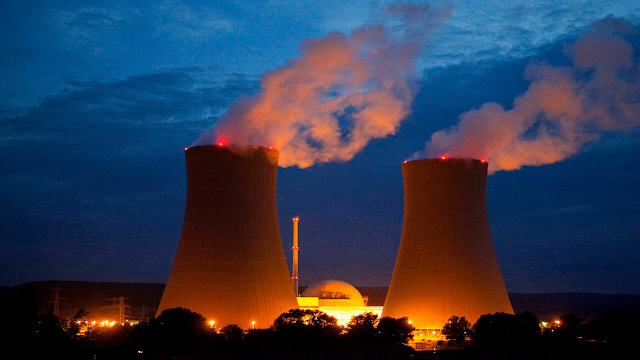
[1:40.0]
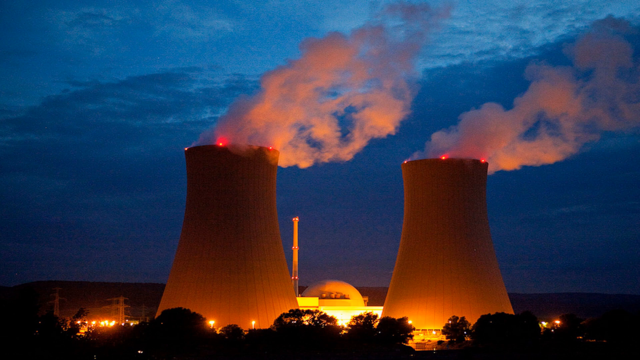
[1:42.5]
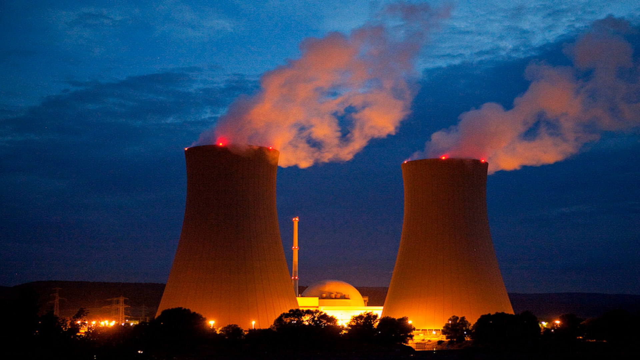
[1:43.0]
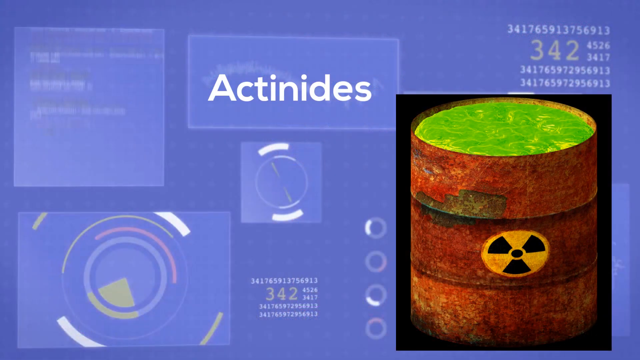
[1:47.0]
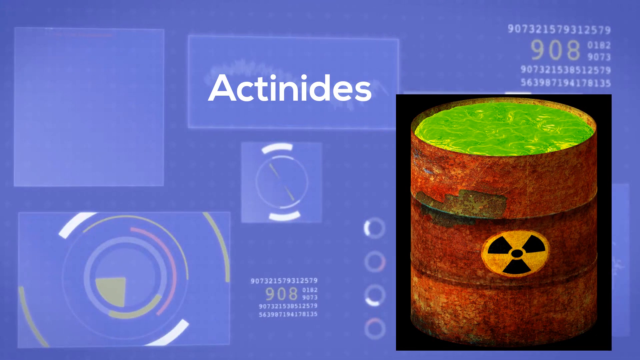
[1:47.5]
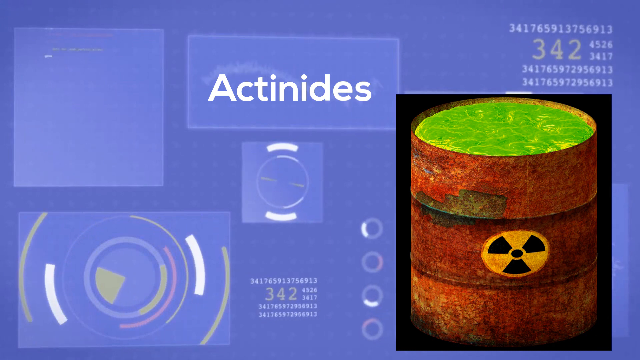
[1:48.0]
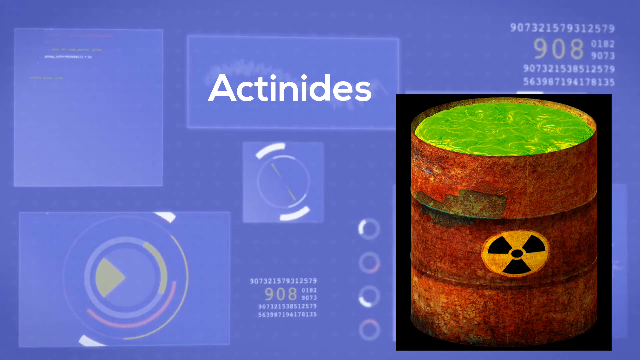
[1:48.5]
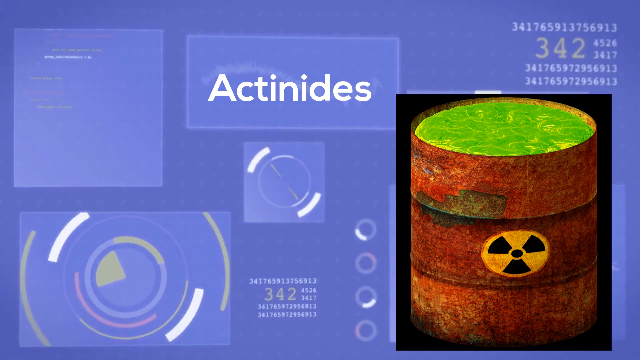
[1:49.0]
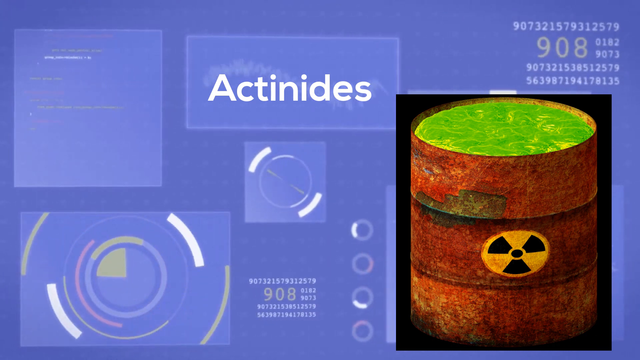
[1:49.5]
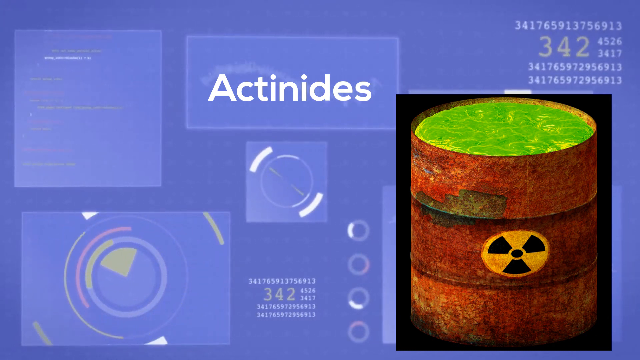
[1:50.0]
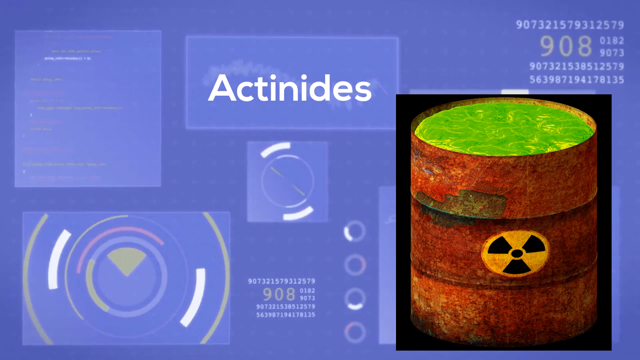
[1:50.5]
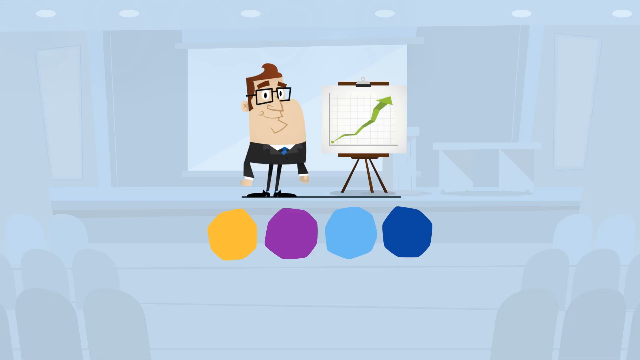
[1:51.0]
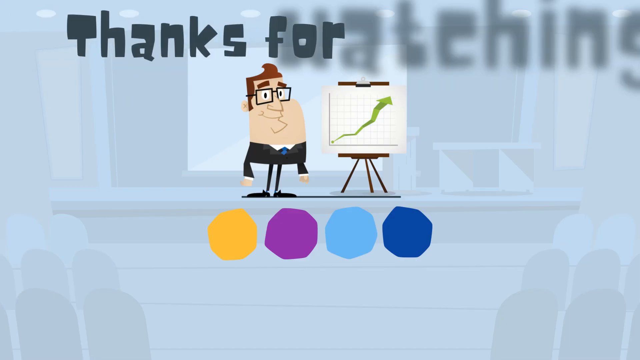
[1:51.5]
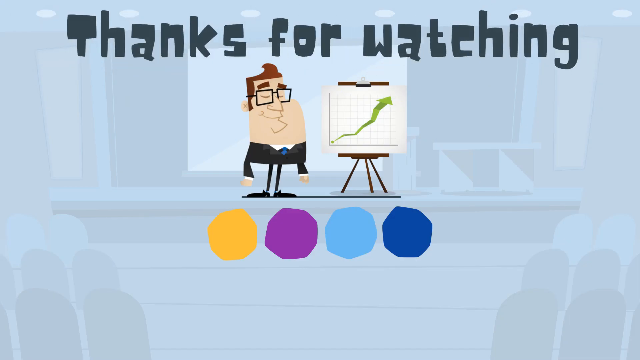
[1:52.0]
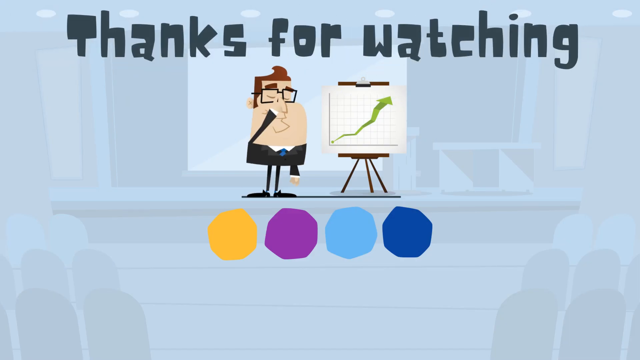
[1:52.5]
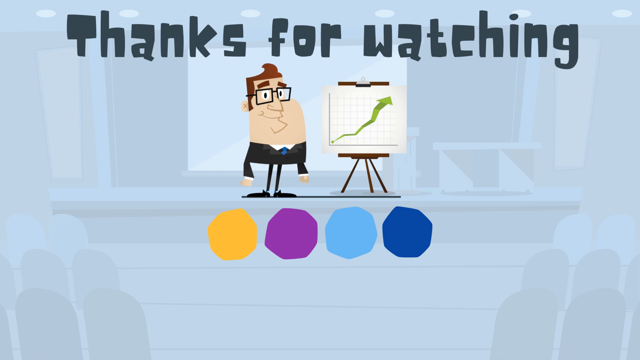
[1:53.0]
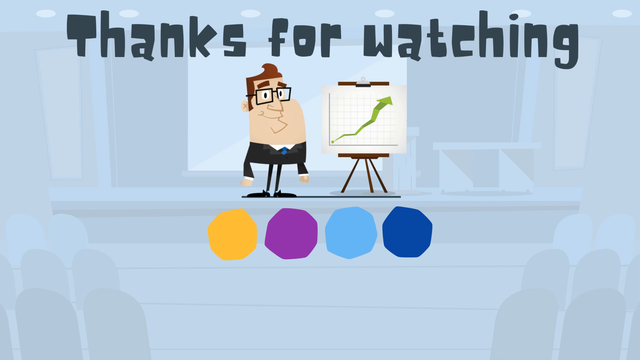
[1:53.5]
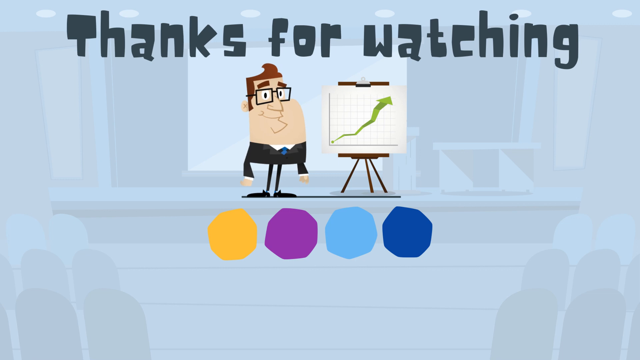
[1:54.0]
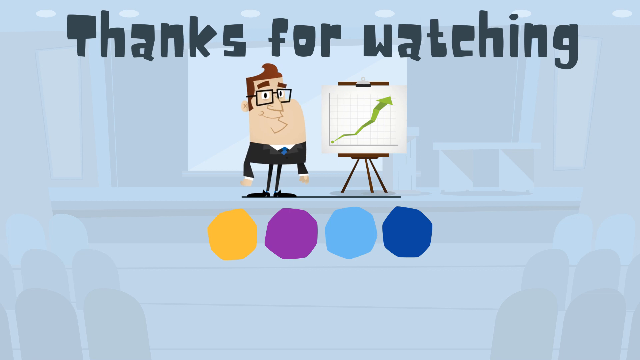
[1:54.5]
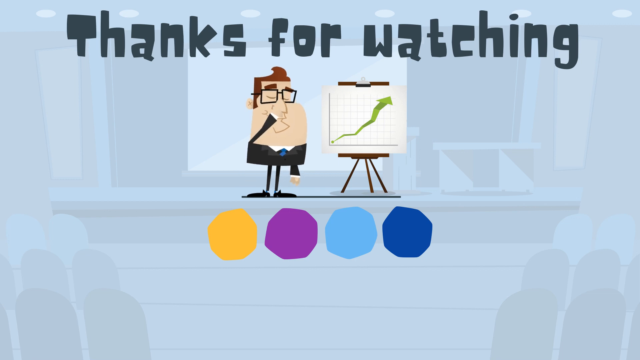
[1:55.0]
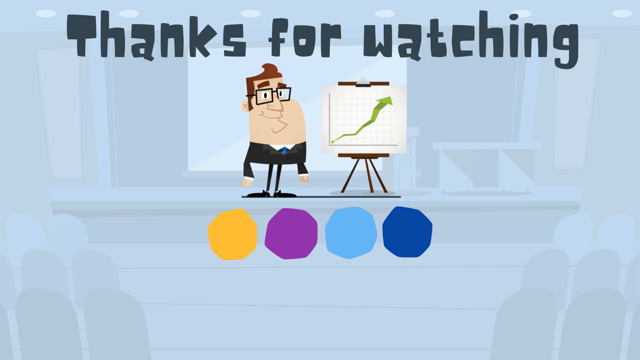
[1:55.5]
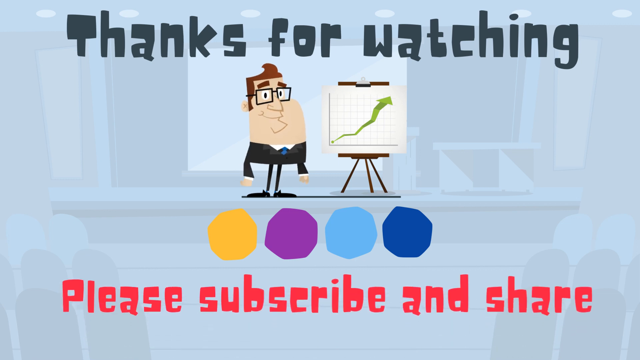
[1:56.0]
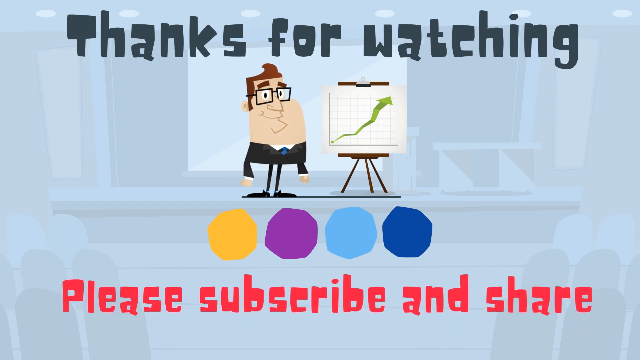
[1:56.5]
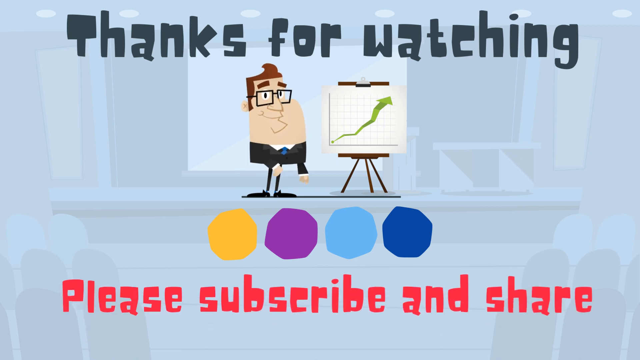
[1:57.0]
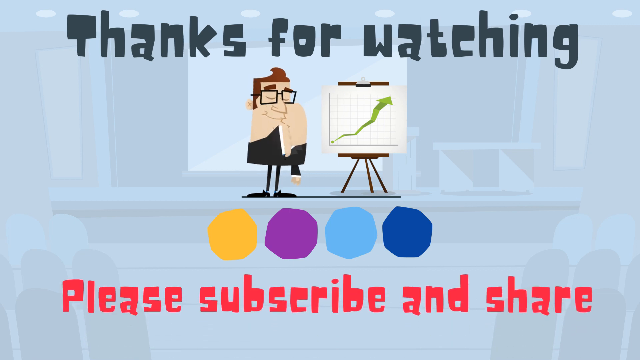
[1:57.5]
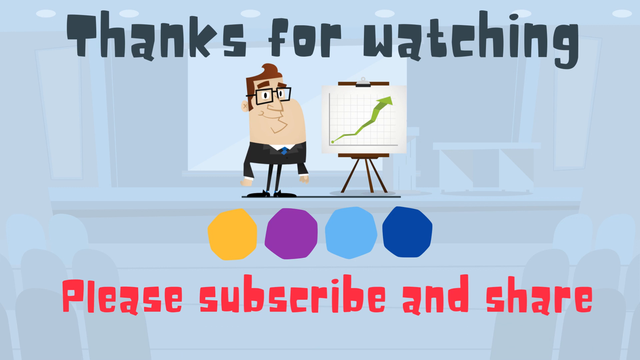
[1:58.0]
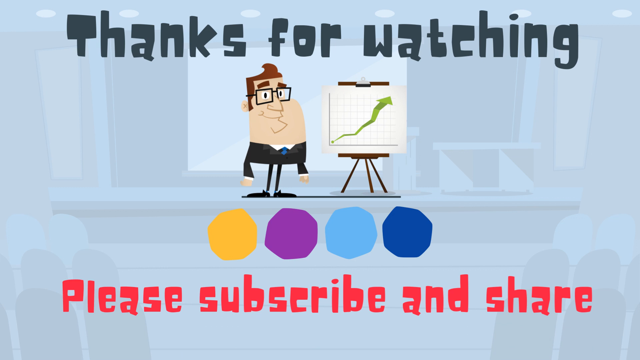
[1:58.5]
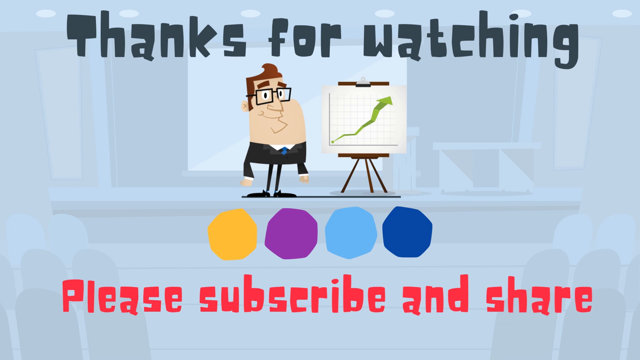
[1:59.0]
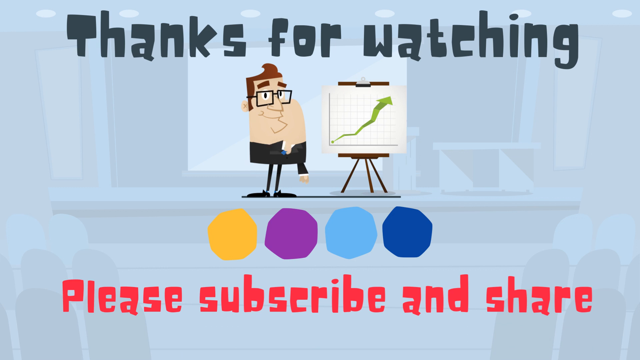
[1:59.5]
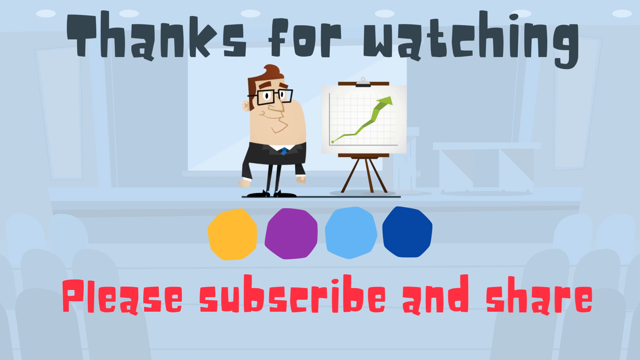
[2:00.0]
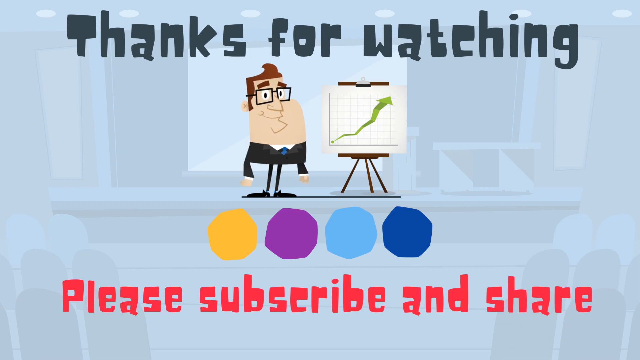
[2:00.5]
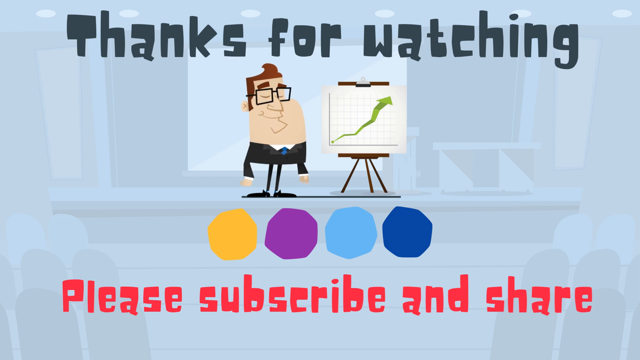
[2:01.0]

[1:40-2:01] The power plant is a static image showing two big, sort of column-shaped structures sitting right next to each other, with a lot of smoke coming out of them and flowing to the right. The smoke has a sort of orangish hue from light coming from below. The video then cuts back to the animation with the oil drum, with text at the top reading "Acindiz." An end screen follows with a sort of chibi-looking animated man with a big head and small body, constantly adjusting his glasses. At the top it says "thanks for watching," and at the bottom, in red text, "please subscribe and share." Right below the man are four little color splotches, from left to right yellow, purple, light blue and dark blue.